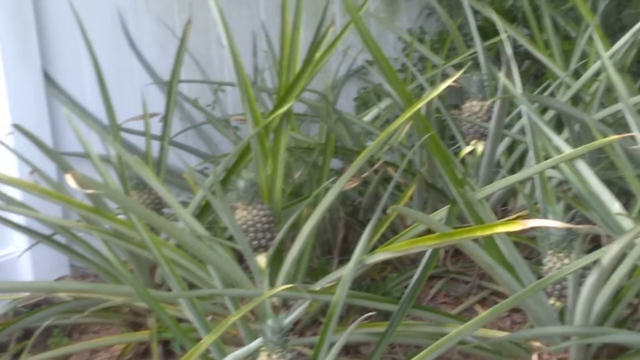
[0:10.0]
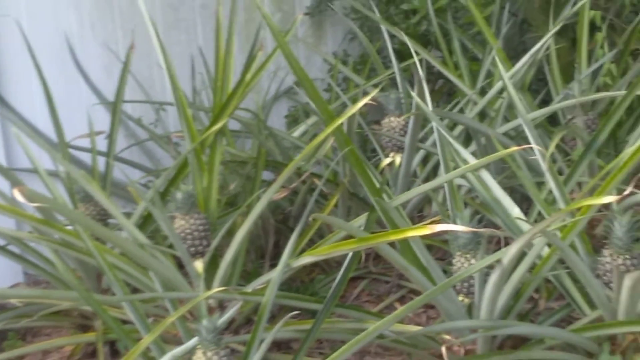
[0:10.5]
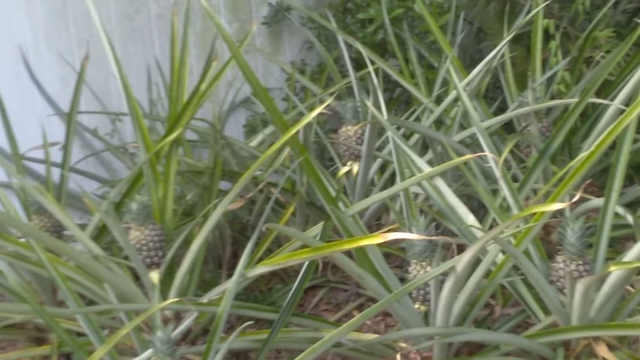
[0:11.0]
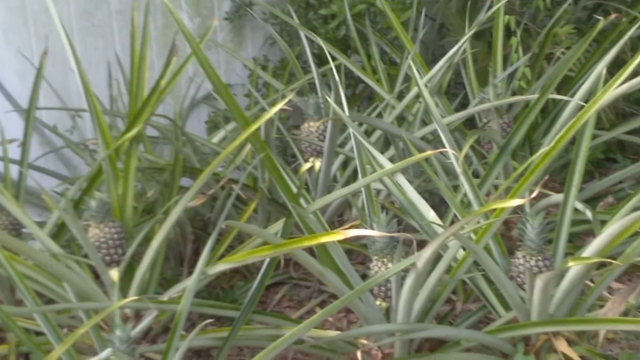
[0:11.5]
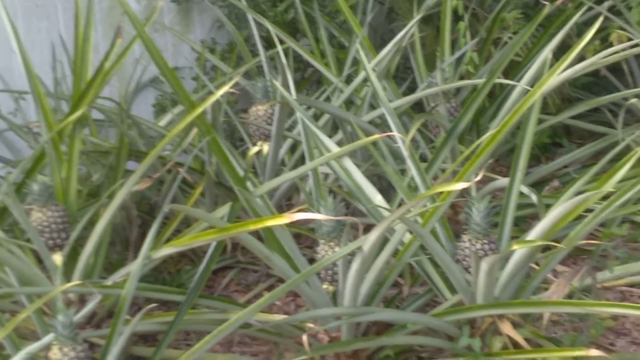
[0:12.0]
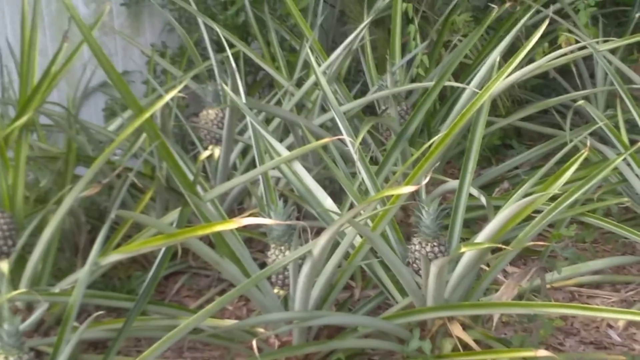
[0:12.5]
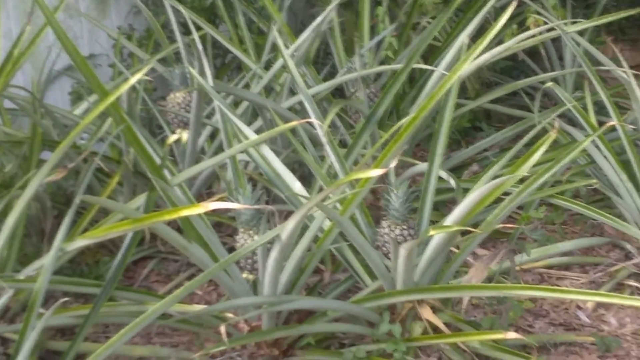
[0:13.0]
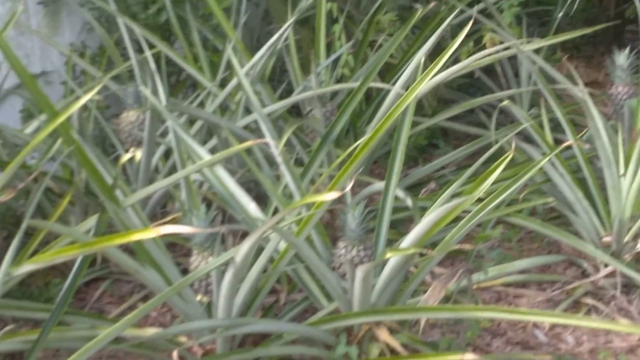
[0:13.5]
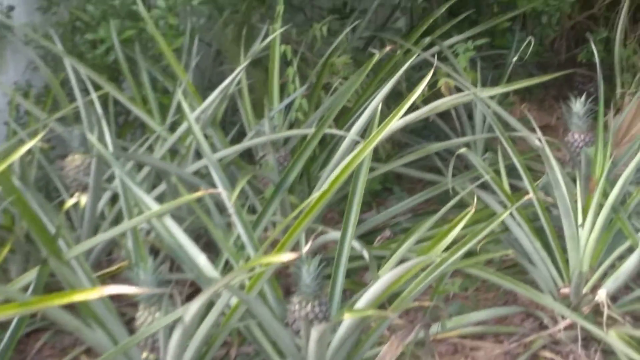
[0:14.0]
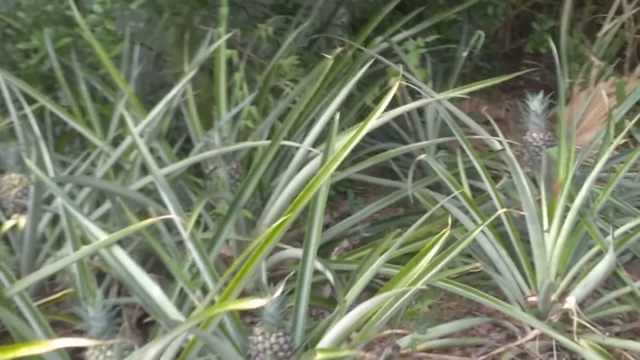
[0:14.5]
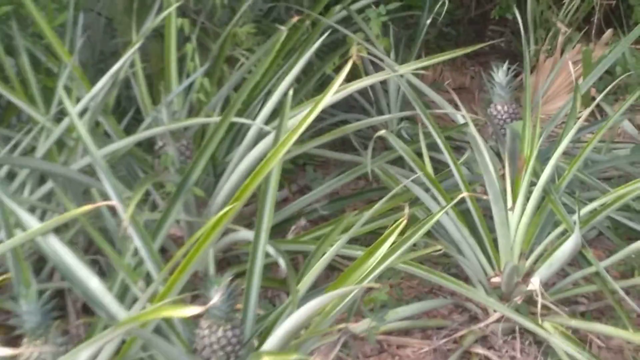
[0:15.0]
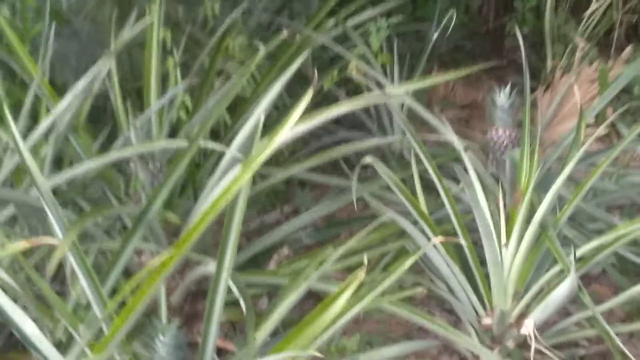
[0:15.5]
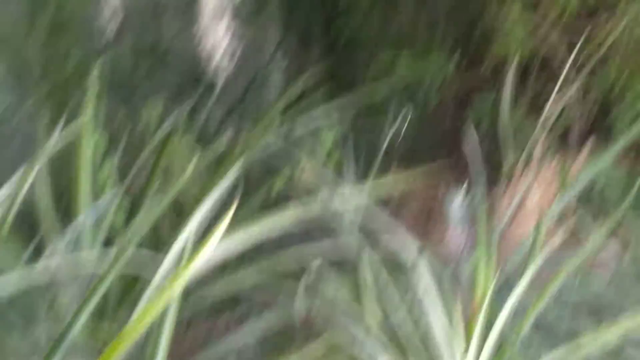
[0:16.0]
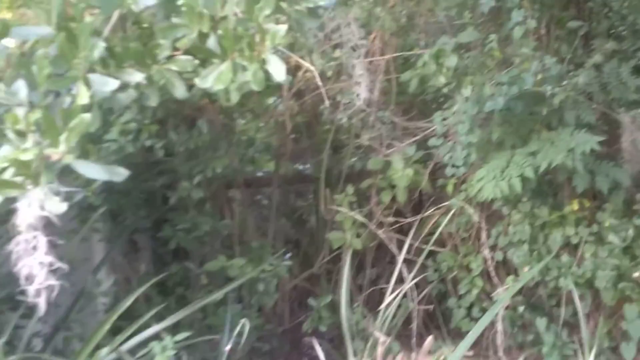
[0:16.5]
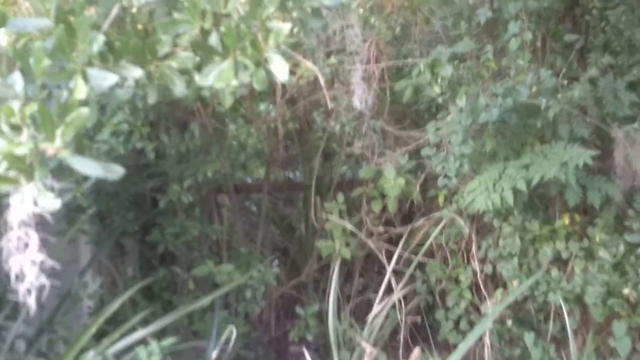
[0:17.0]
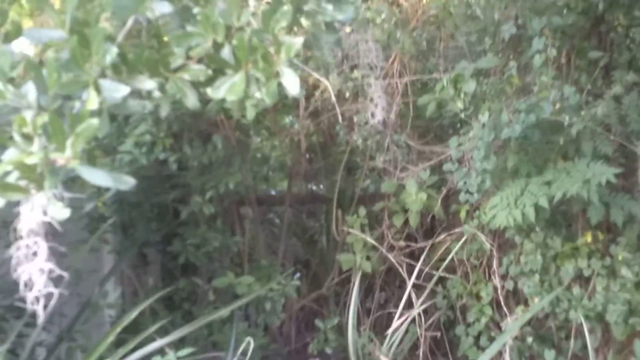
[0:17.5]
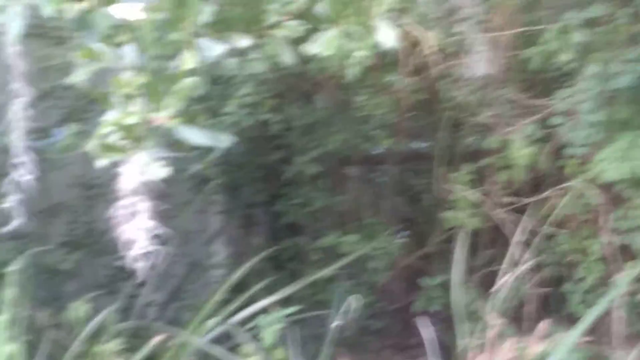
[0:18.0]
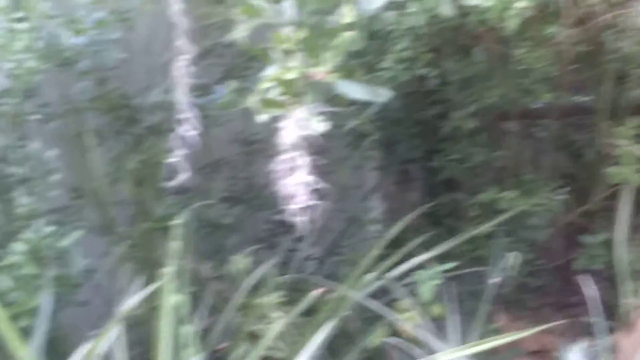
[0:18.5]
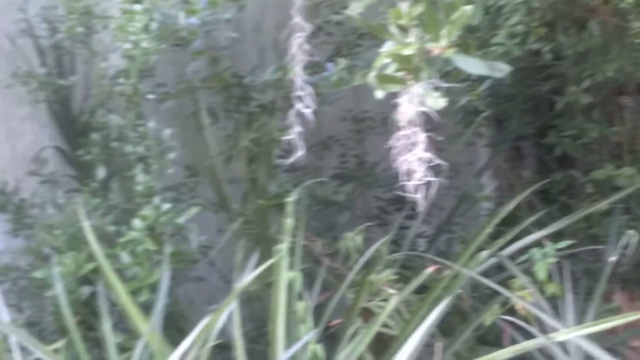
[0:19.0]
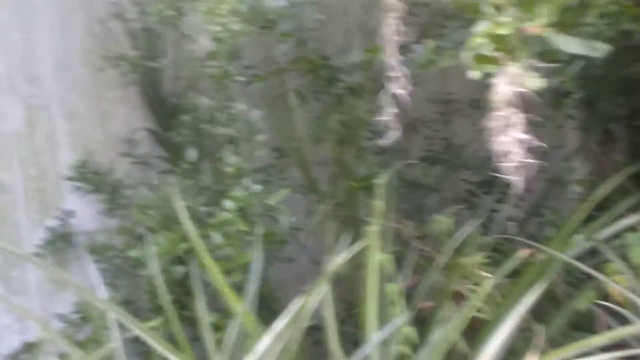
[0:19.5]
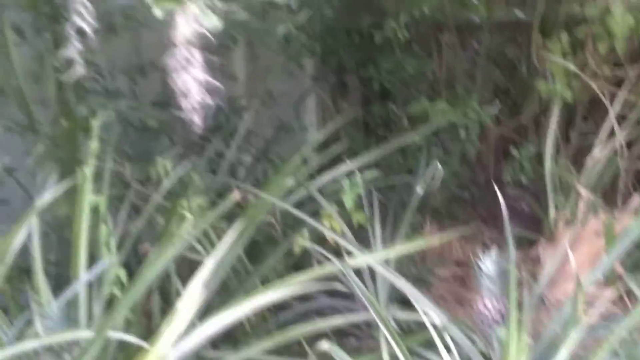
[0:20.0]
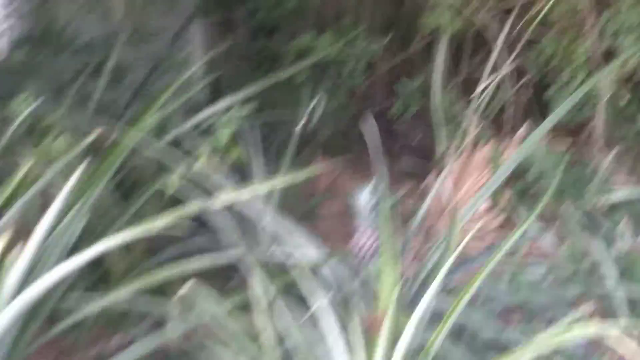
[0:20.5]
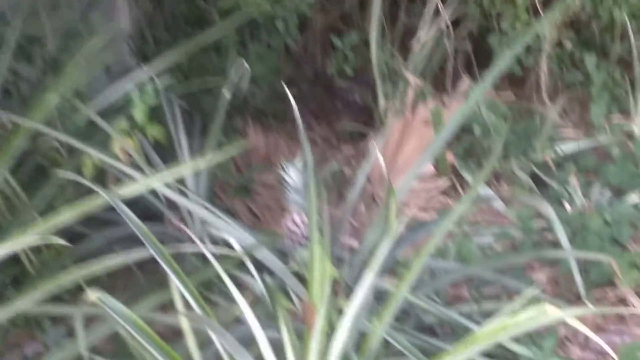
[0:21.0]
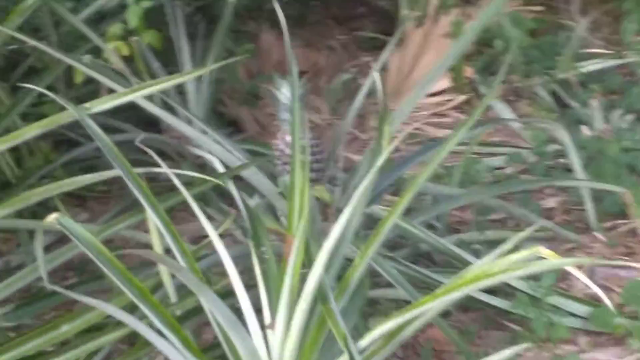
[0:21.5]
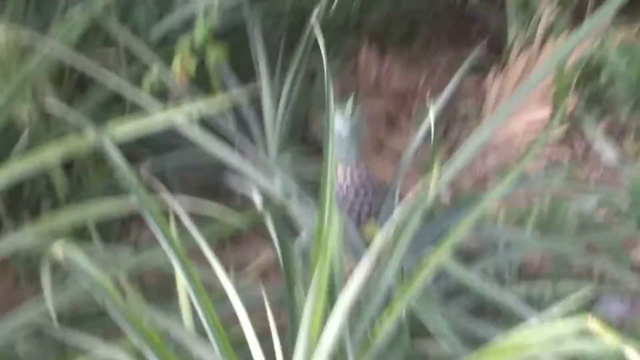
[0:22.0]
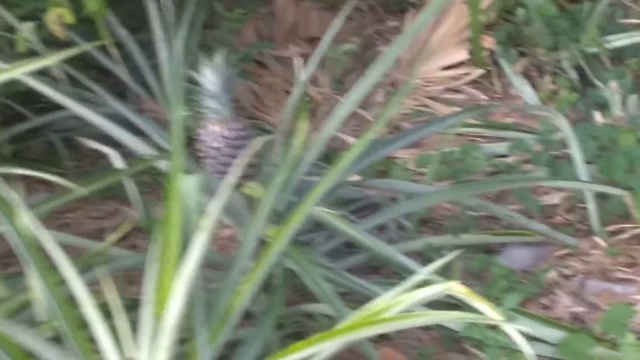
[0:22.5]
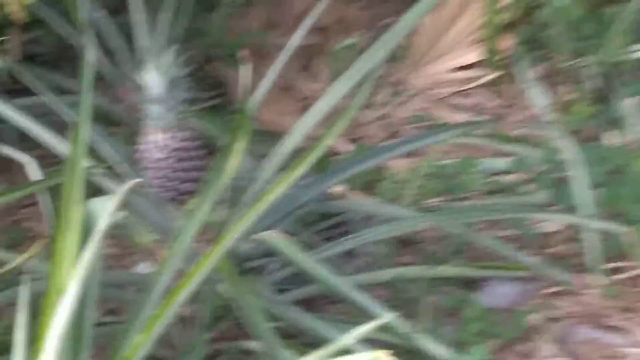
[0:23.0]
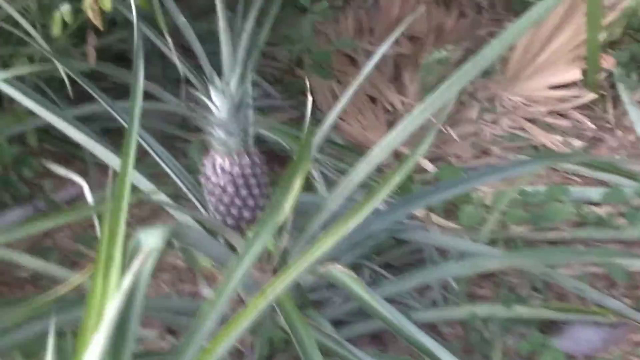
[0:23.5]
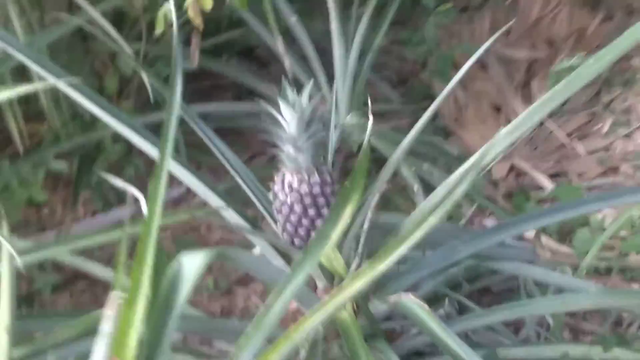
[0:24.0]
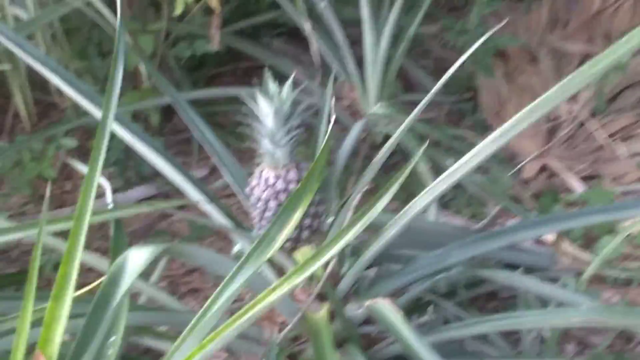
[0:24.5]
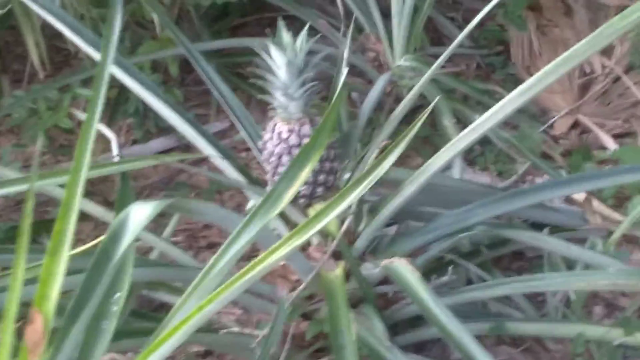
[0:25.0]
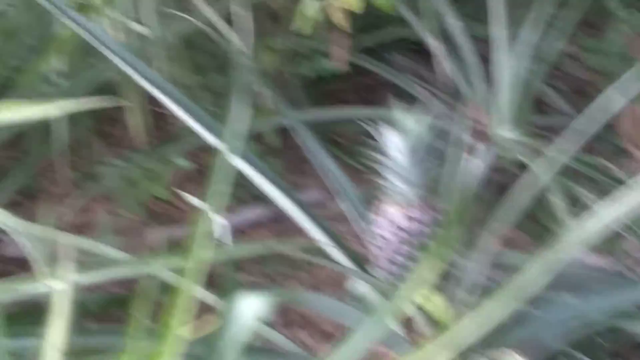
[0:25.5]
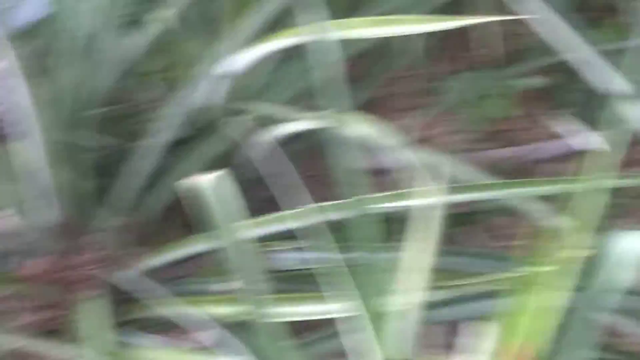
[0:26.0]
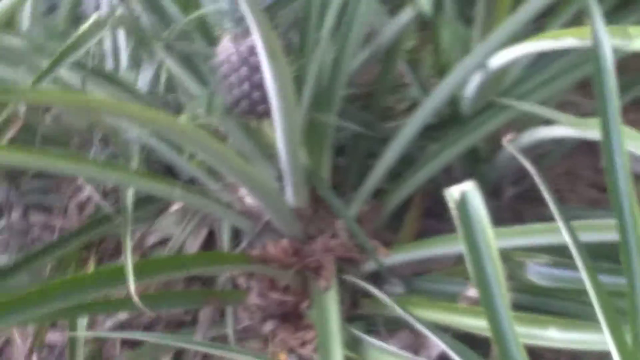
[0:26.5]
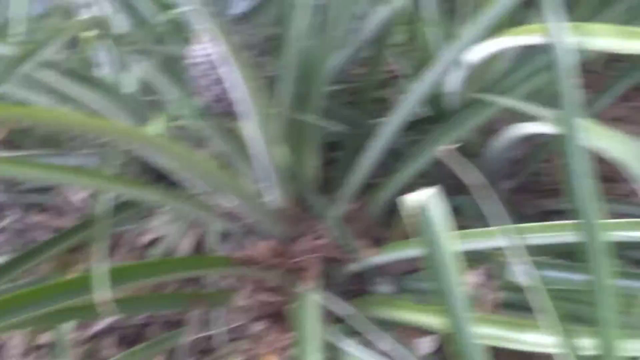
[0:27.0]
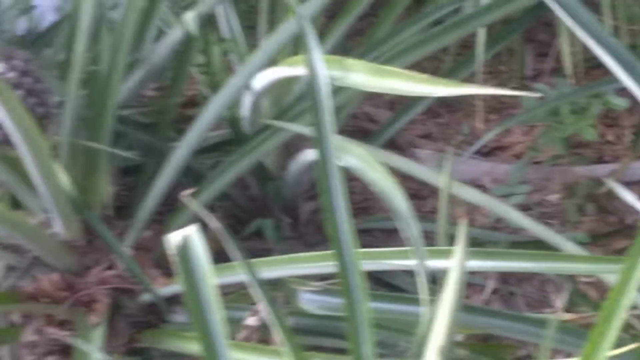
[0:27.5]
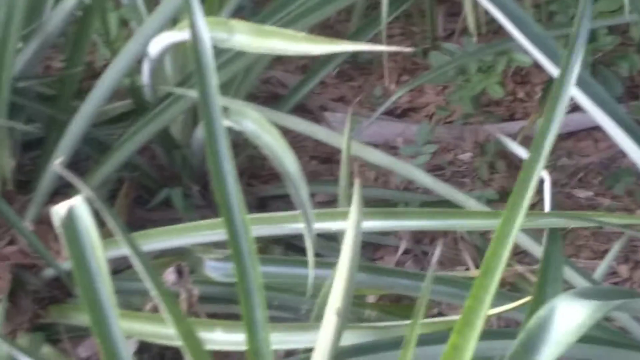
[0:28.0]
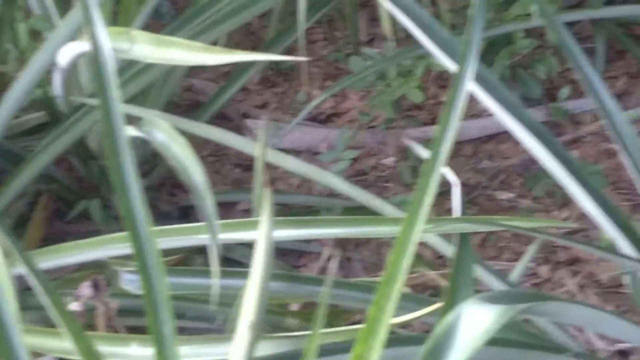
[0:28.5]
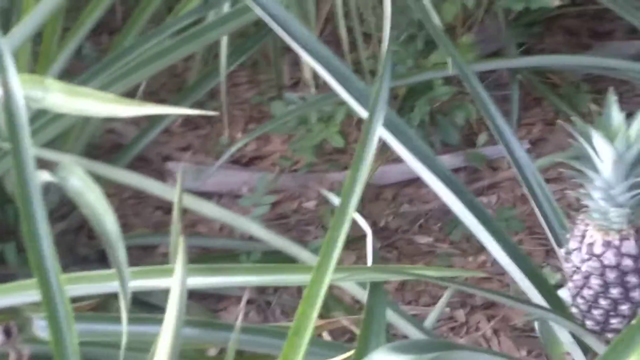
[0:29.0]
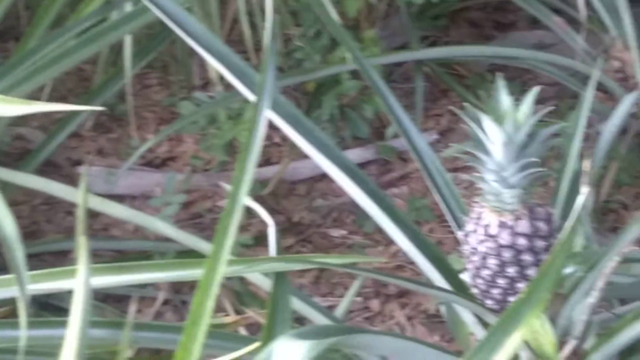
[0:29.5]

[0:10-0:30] The shot is zoomed in on a baby pineapple plant. The camera moves to the right and then forward, walking down the little baby pineapple garden, and pans up a little to show green trees behind the plant; the trees have light green leaves that hang over somewhat. Mulch and some dried leaves are on the ground. The camera zooms in very close to one of the baby pineapples, then pans a little to the left to show another one close by. The white fence is behind the pineapple plants, and the plants' leaves are touching it. Each spiky plant has a baby pineapple on the inside, there are at least three plants for every three feet or so, and the garden seems to be at least 20 feet wide.